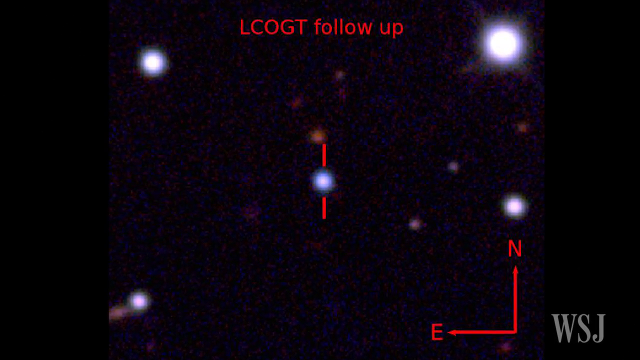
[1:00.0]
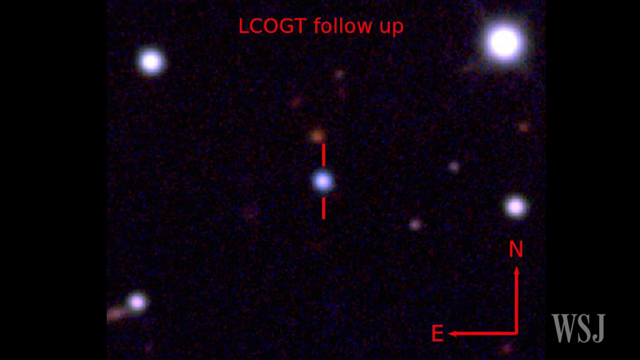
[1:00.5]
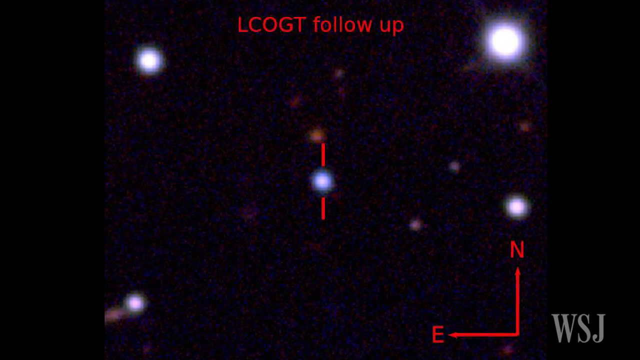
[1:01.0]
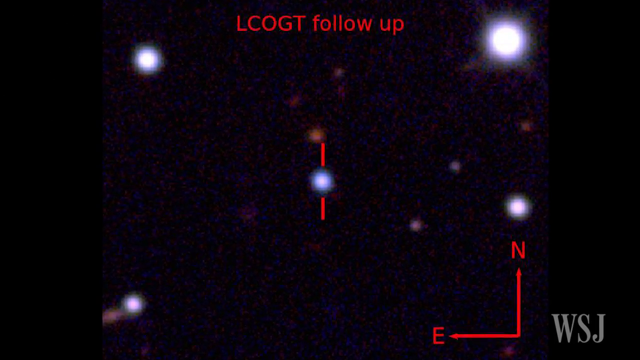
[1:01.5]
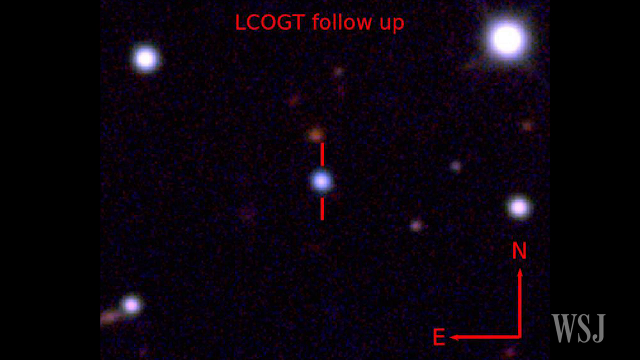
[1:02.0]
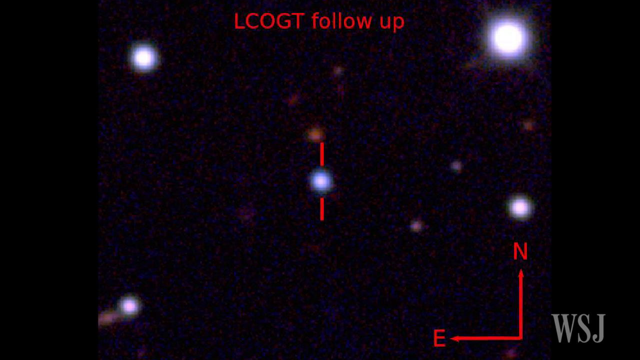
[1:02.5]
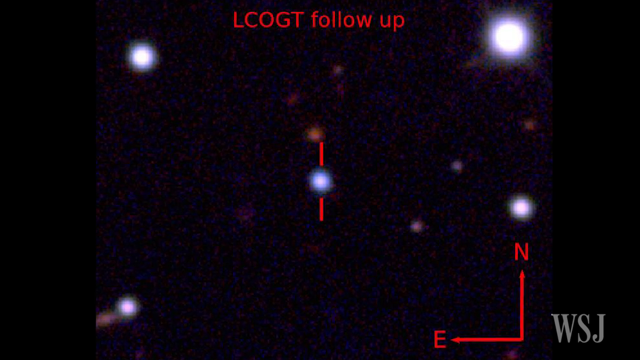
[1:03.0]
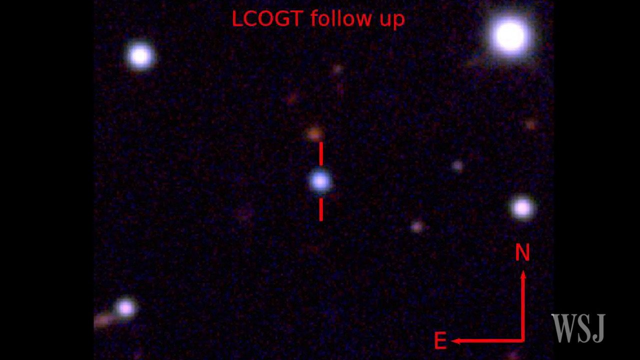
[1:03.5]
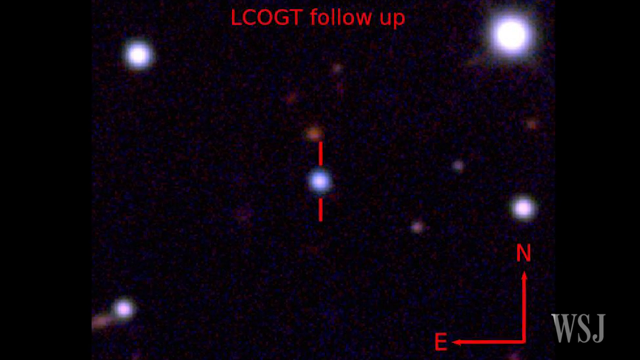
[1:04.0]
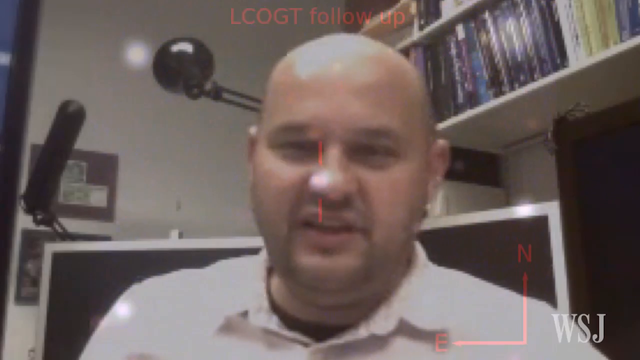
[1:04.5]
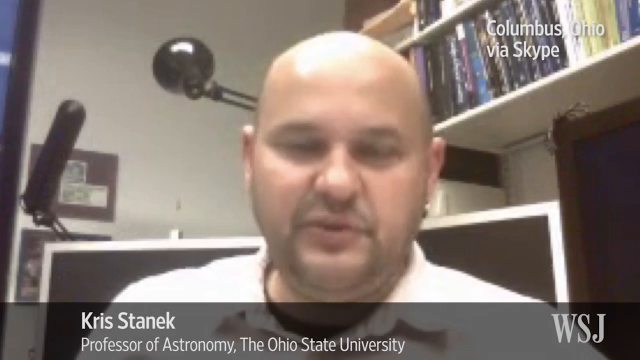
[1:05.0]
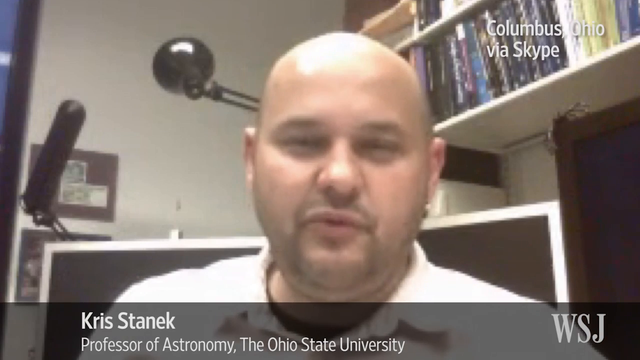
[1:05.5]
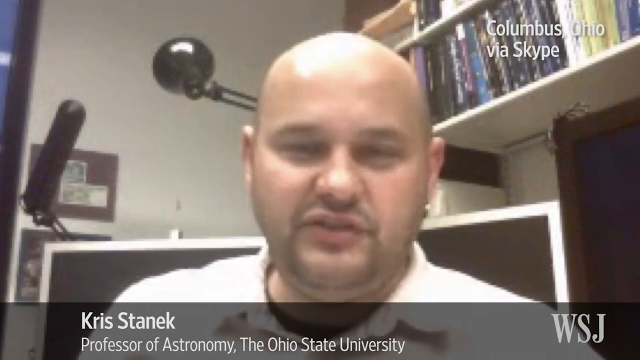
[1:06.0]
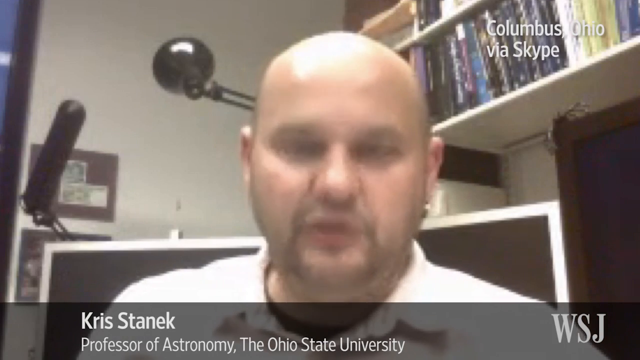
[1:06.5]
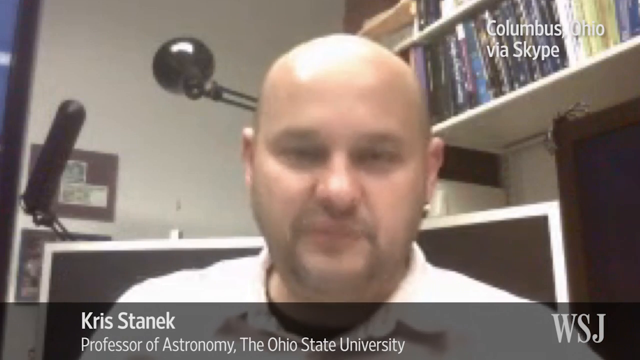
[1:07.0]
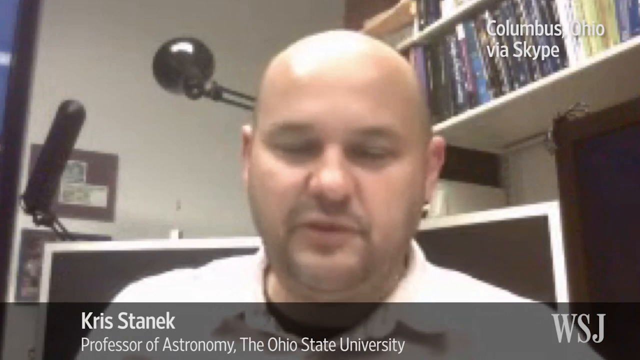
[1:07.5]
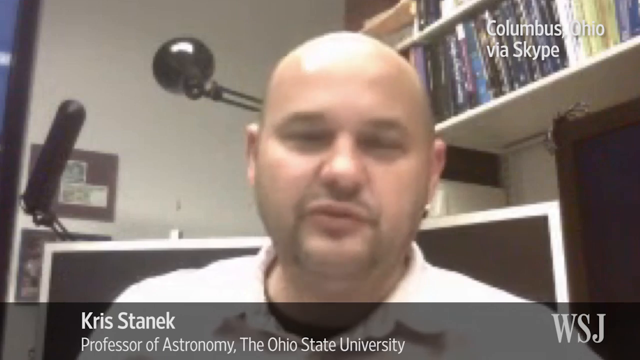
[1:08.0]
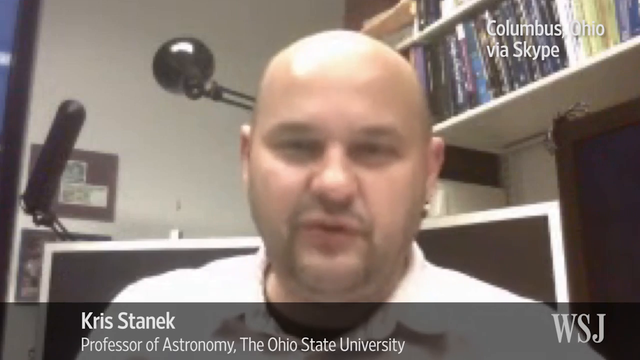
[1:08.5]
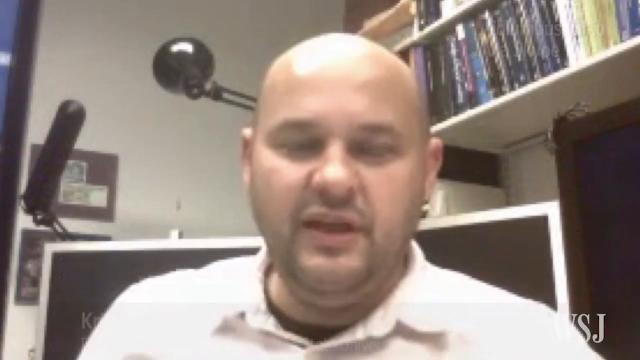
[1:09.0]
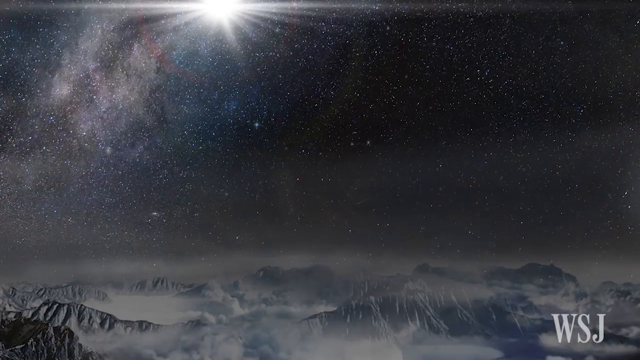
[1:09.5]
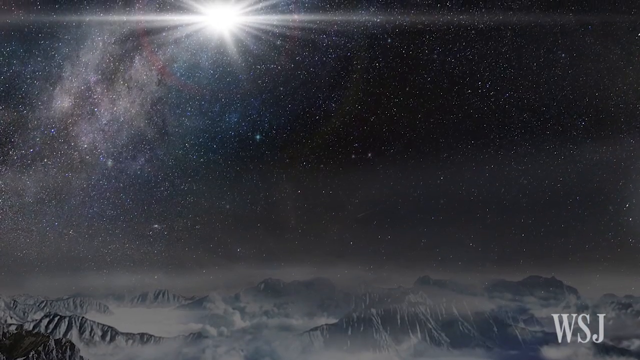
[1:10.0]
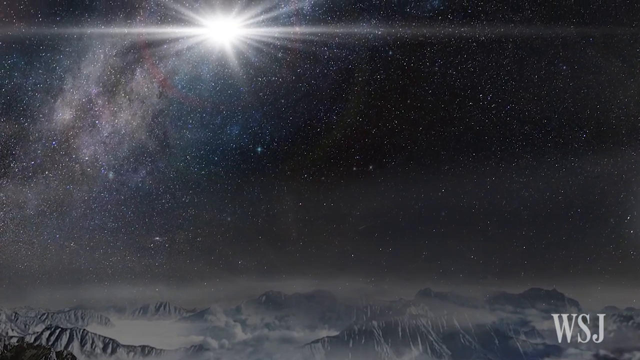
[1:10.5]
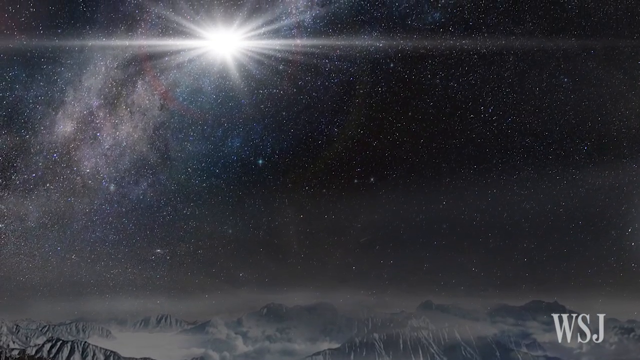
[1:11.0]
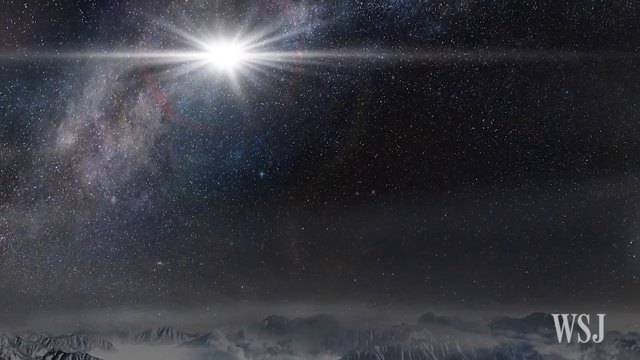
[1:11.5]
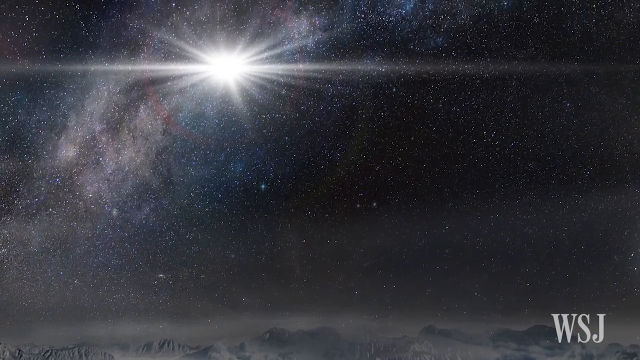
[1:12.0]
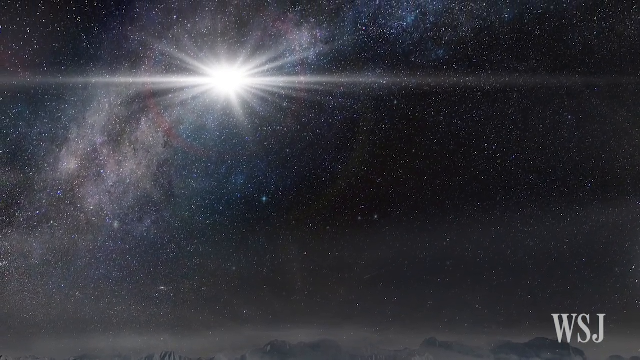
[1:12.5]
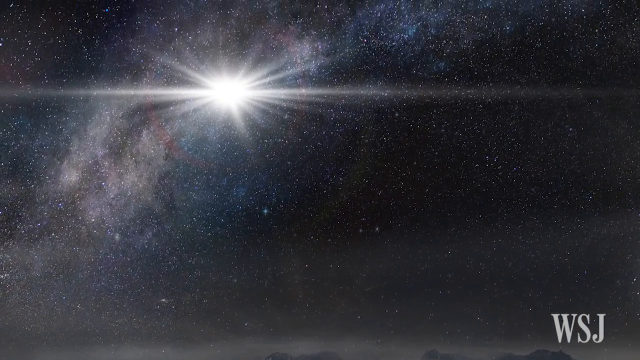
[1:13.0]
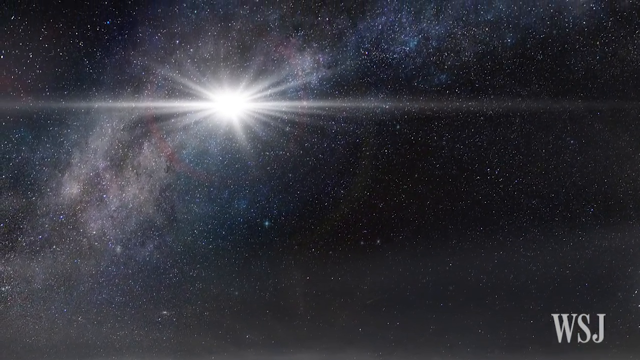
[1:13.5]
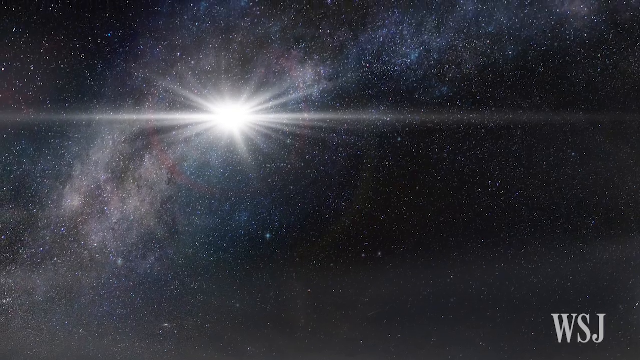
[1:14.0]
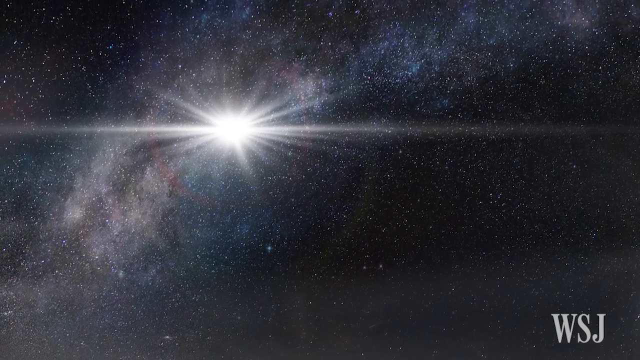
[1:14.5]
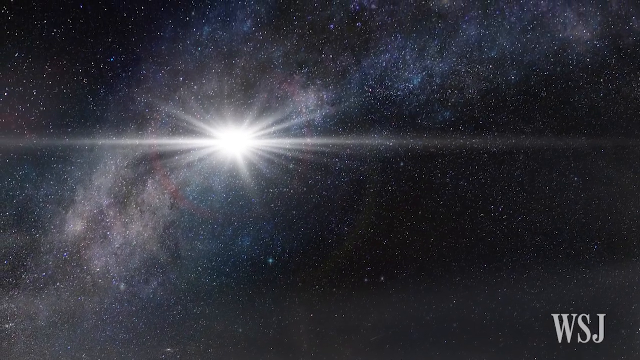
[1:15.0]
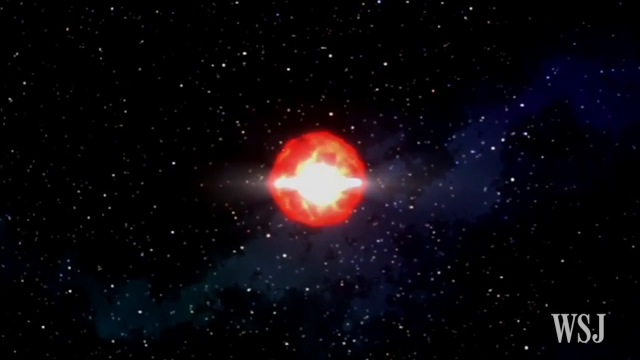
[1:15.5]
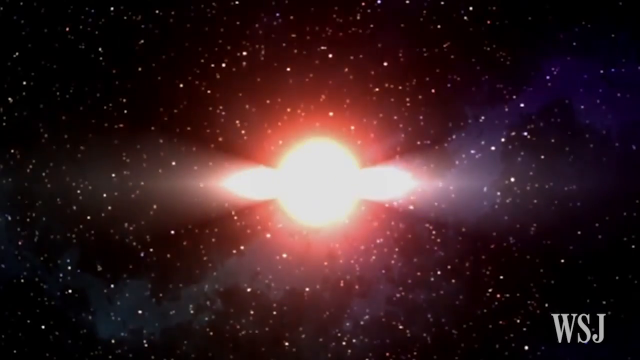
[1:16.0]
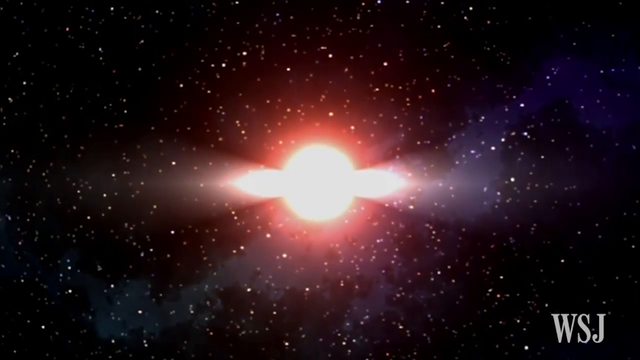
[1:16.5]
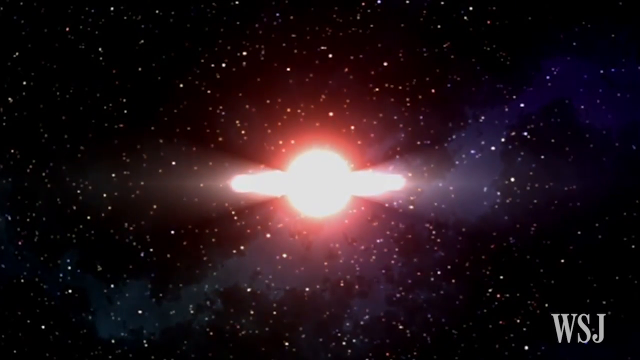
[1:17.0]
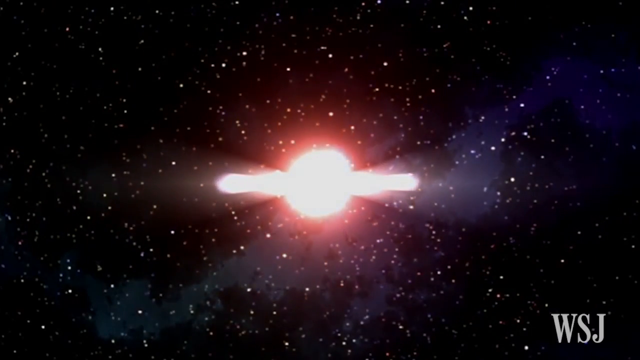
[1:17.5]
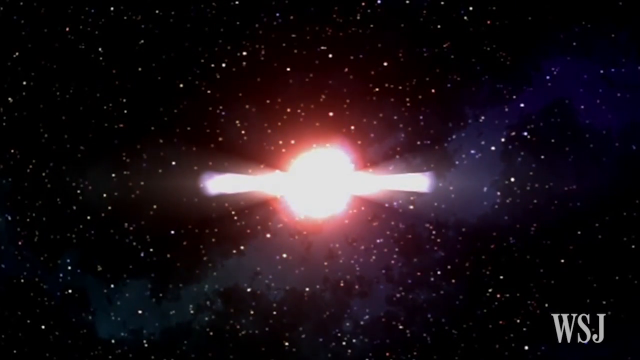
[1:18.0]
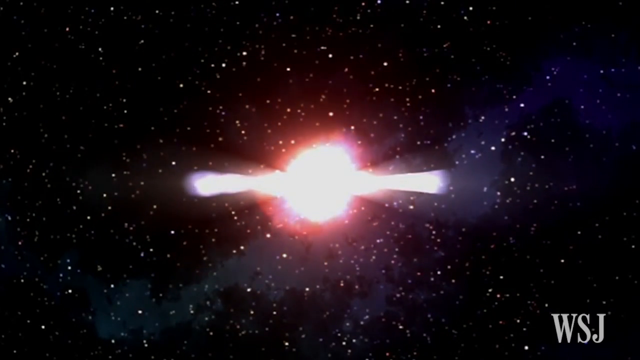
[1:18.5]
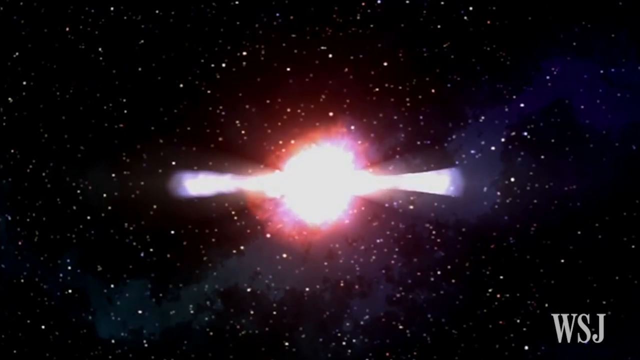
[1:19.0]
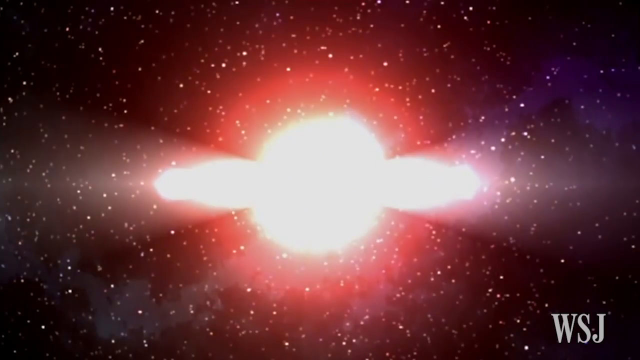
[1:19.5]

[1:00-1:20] The LCOGT follow-up image remains on screen. Then a scientist, Chris Stanek, professor of astronomy at The Ohio State University, based in Columbus, Ohio, is interviewed via Skype. He looks to be in his 30s, is bald-headed and shaven on the sides, and has a short beard. He is sitting, apparently in his office, with a monitor behind him and a couple of shelves of books visible. He nods his head as he speaks. The video cuts back to the image of a very rocky planet with a sun above it, apparently seen earlier, followed by what appears to be an exploding sun at the end of its life.